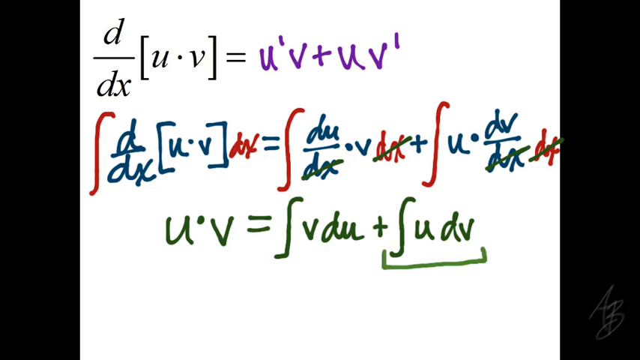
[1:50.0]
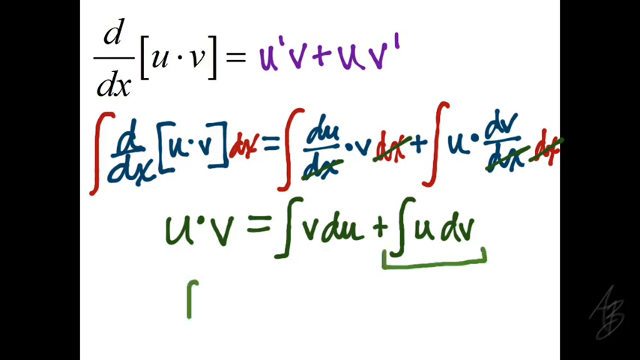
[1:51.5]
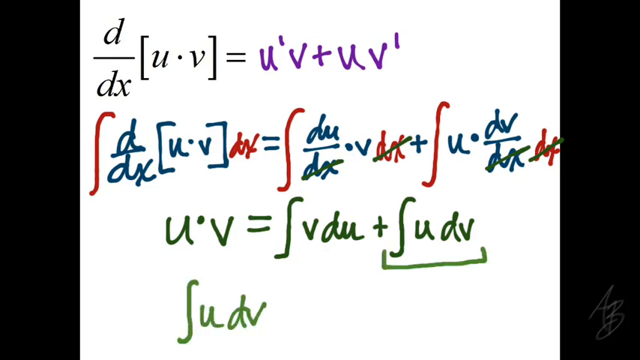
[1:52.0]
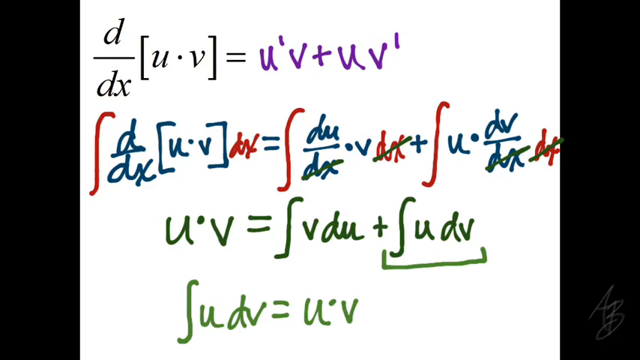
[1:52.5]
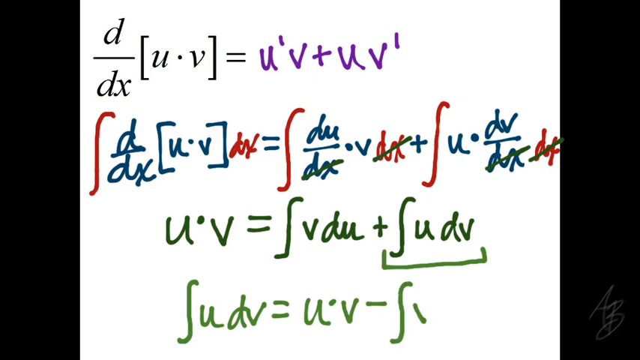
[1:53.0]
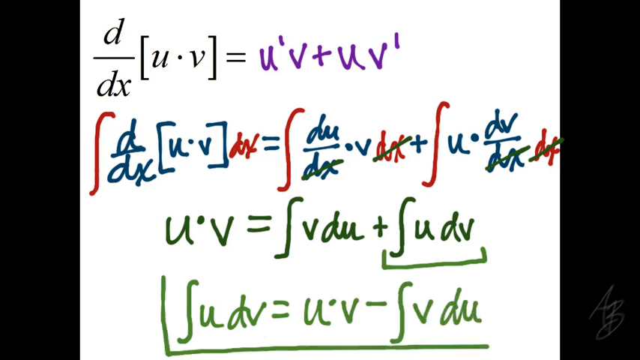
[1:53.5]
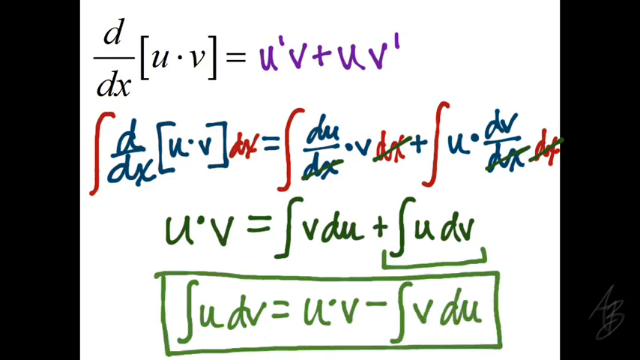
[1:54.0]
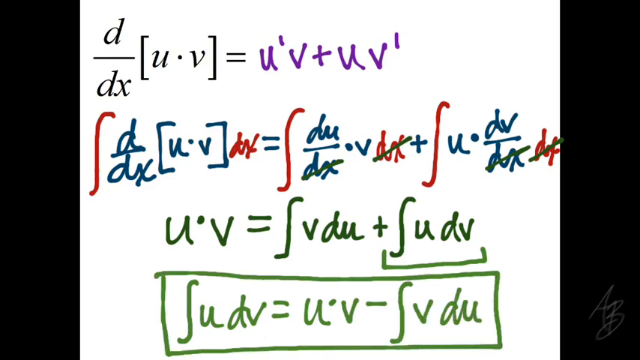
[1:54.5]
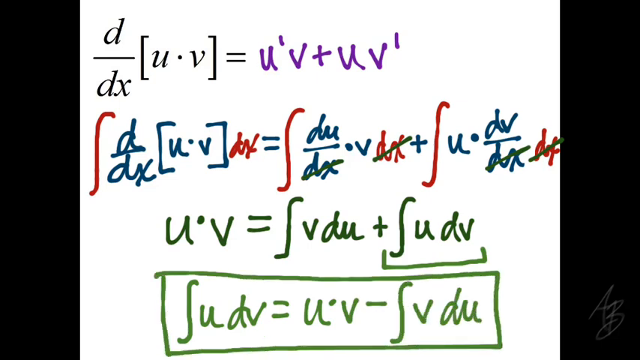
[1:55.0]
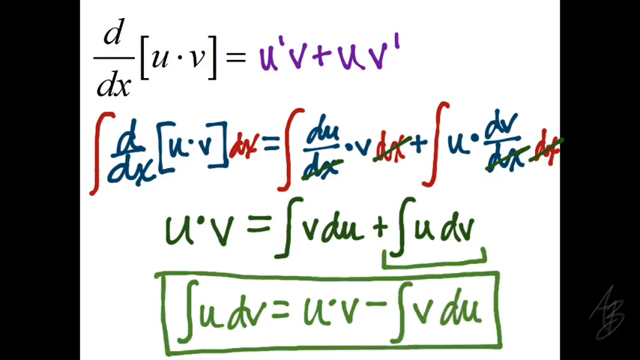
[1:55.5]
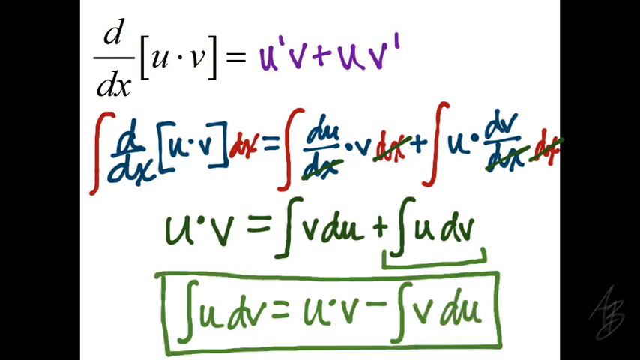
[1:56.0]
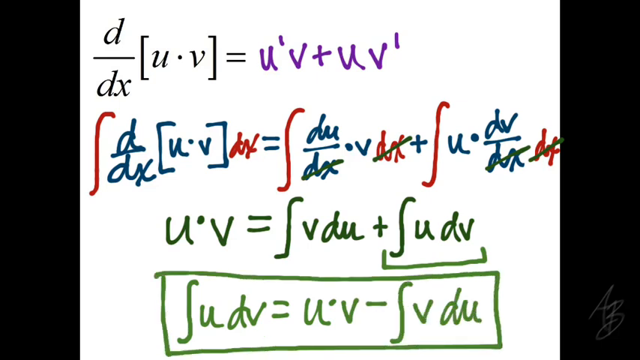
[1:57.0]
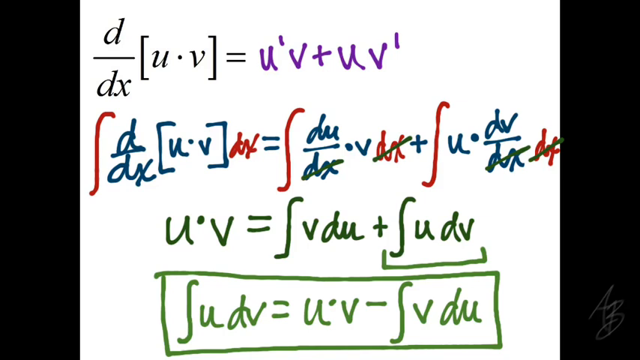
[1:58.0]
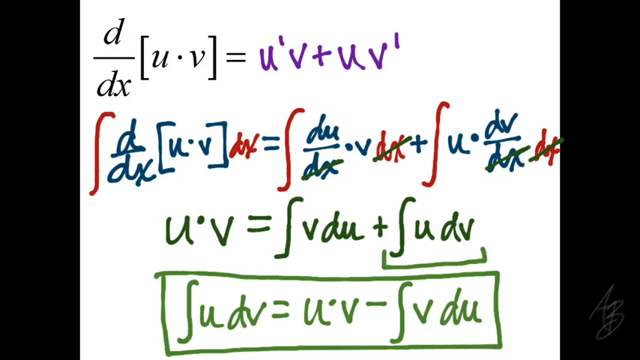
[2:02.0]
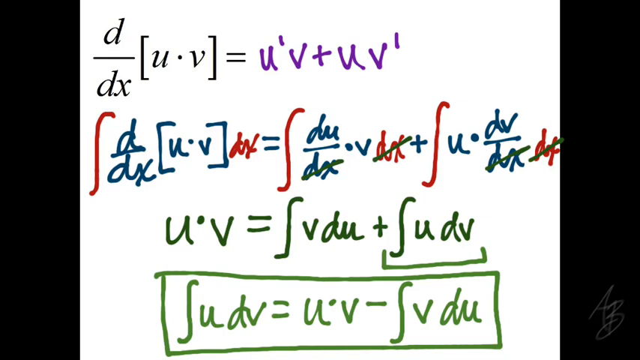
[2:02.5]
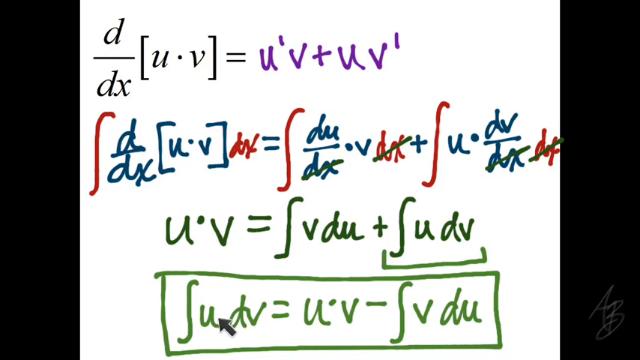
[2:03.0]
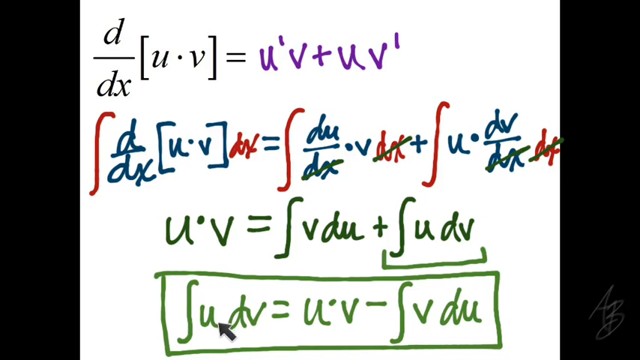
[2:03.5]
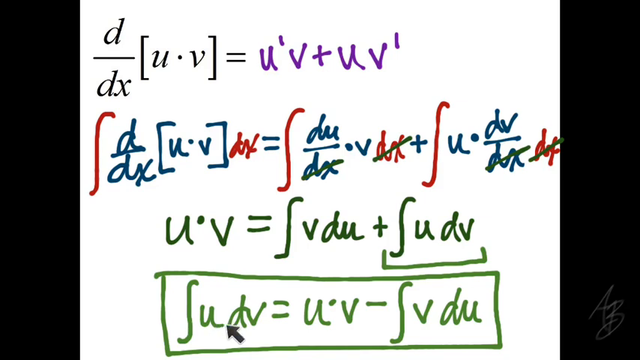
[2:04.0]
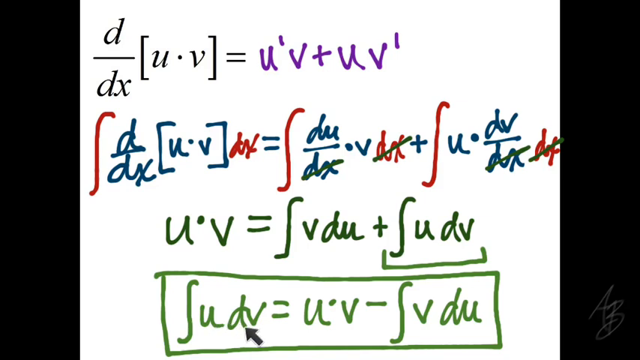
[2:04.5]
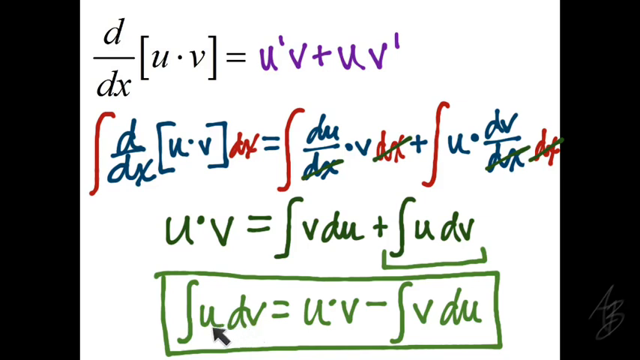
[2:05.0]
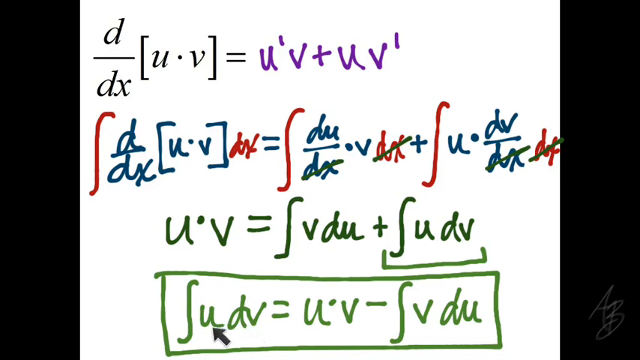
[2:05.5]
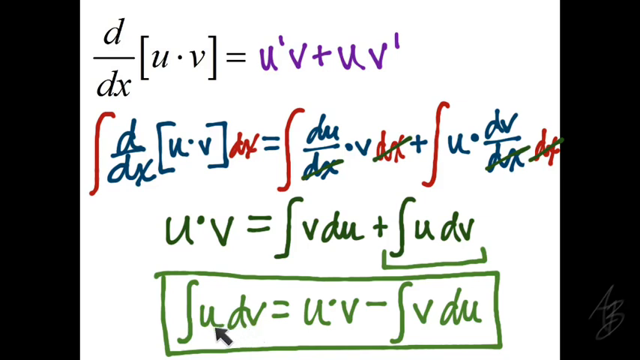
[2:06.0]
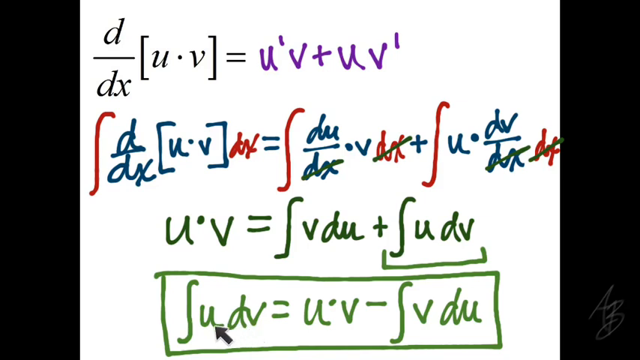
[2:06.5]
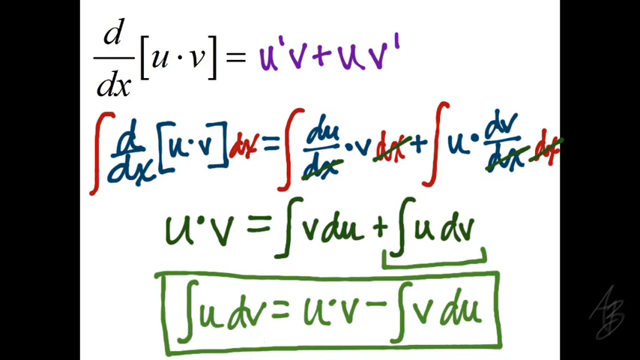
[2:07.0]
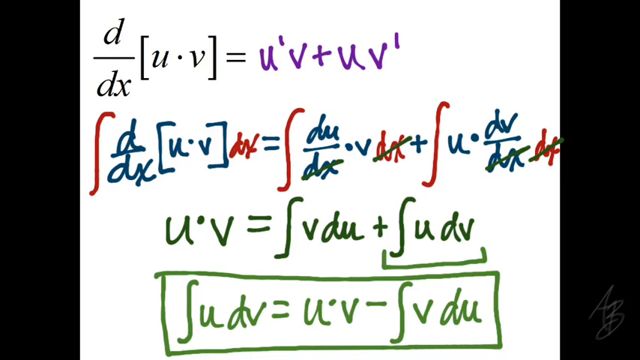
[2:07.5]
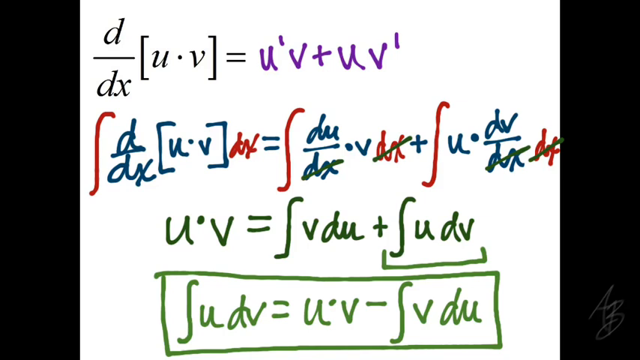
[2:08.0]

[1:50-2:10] A green bracket is drawn below the last portion of the third line, under integral u dv in the expression u times v equals integral v du plus integral u dv. Below that, on a fourth line, integral u dv equals u dot v minus integral v du is written in a lighter green ink and surrounded by a rectangle drawn in the same green ink, indicating that it is the solution. A black arrow points out integral u dv. This appears to be an application of the product rule and integration by parts. Multiple marker colors are used: purple, red for the integrals and the additional dx used to reduce the equation, aqua blue for further application of the derivatives, and green for the final form and solution.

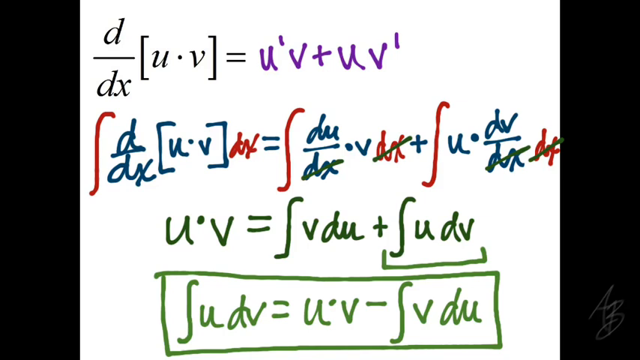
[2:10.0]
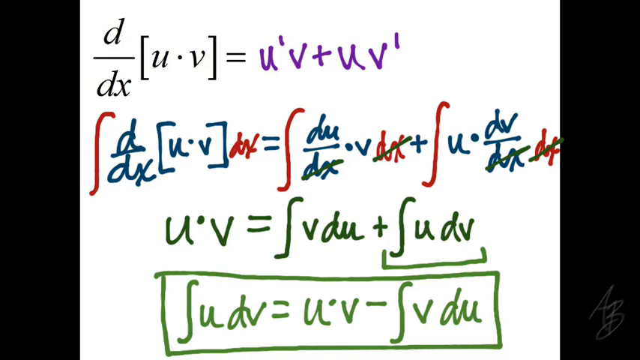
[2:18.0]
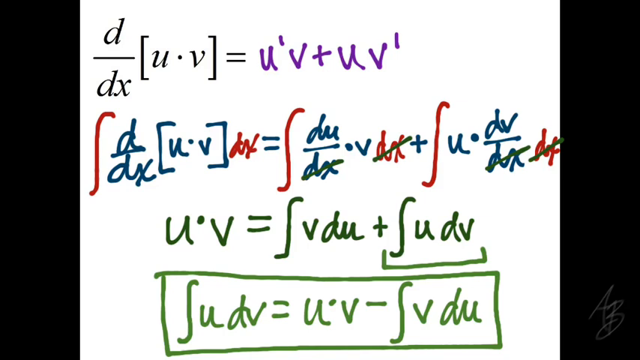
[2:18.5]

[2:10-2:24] The solution, integral u dv equals u times v minus integral v du, is highlighted in a green box drawn in the same ink as the solution.